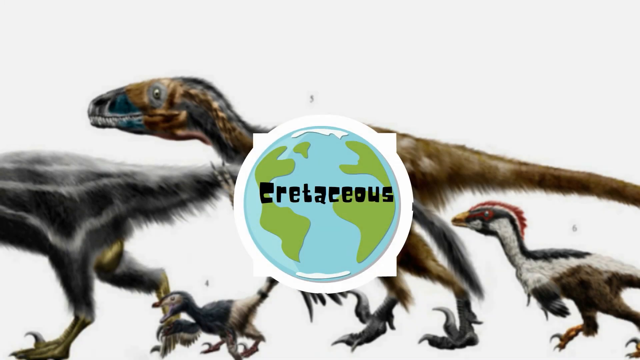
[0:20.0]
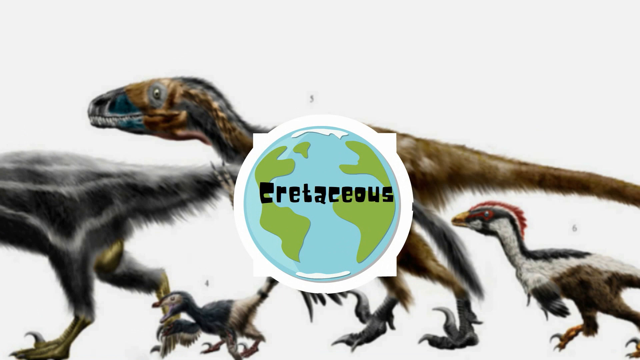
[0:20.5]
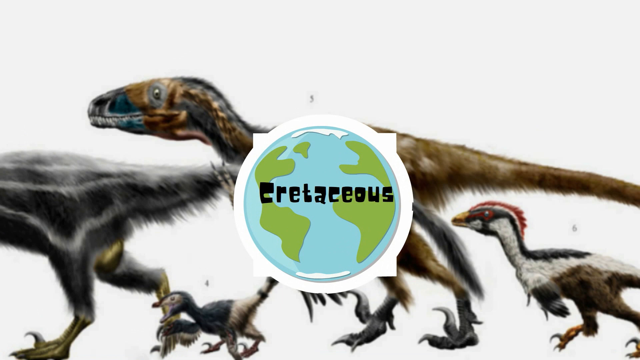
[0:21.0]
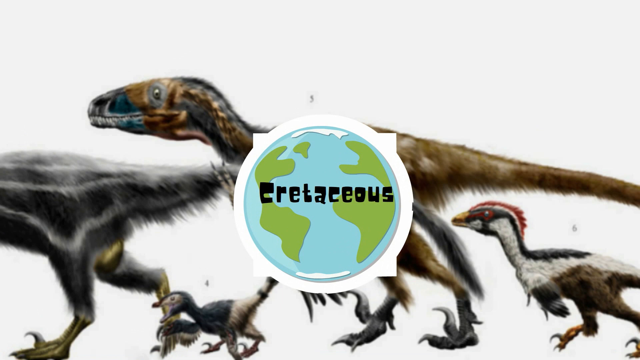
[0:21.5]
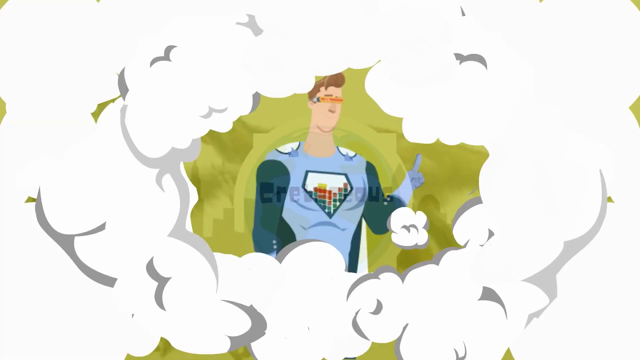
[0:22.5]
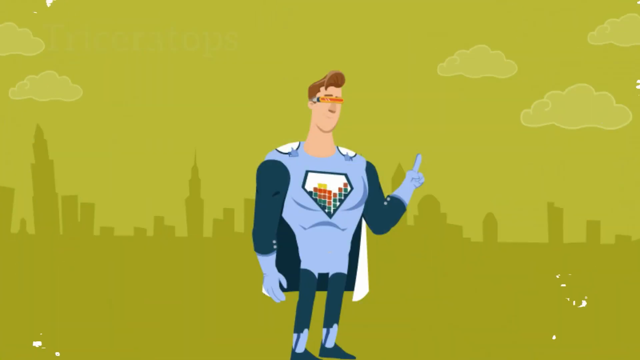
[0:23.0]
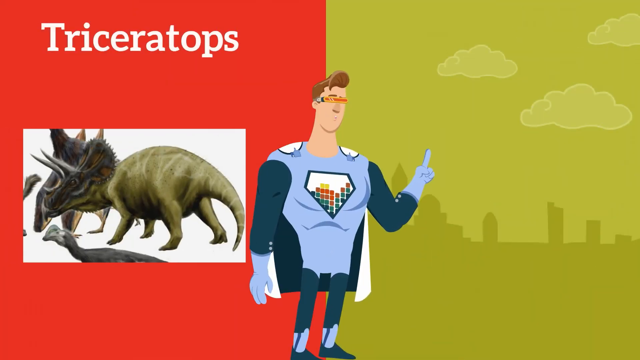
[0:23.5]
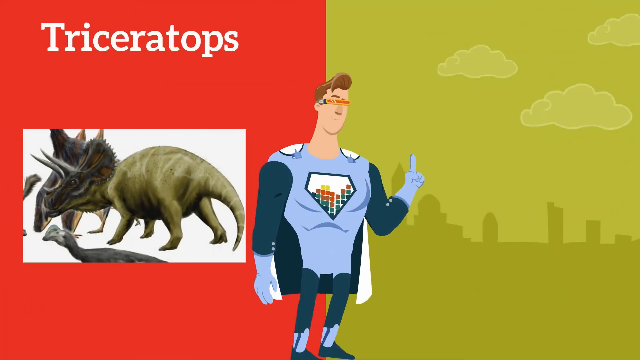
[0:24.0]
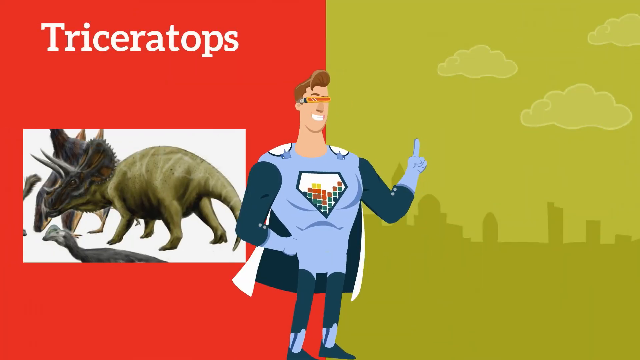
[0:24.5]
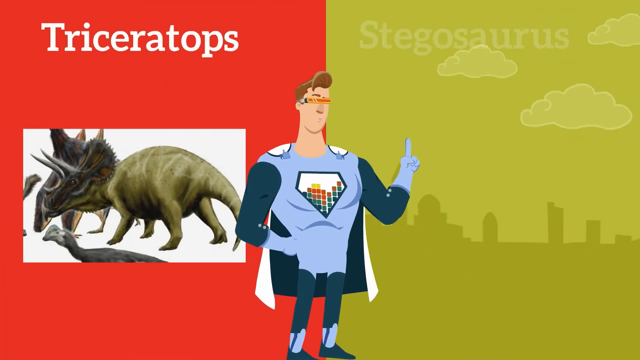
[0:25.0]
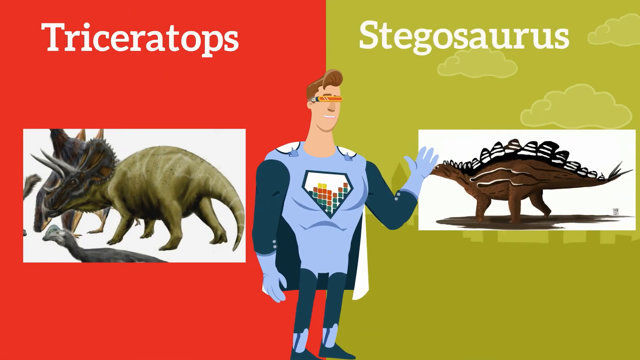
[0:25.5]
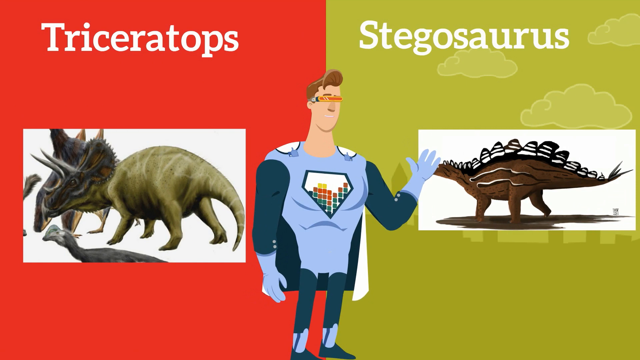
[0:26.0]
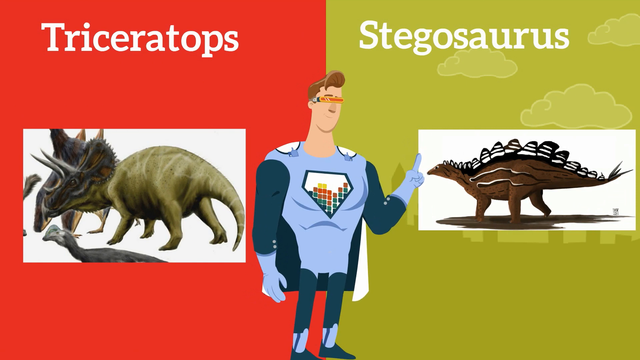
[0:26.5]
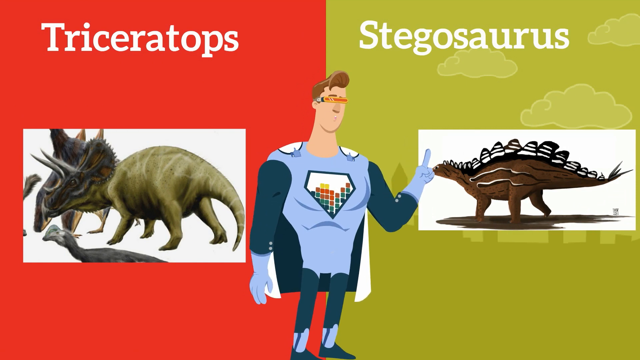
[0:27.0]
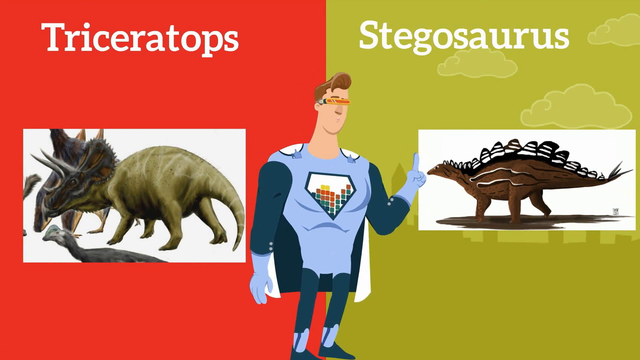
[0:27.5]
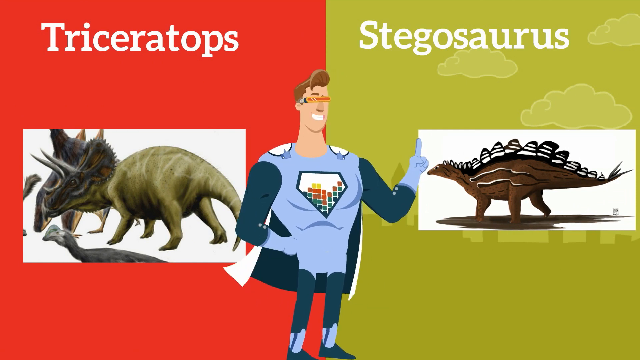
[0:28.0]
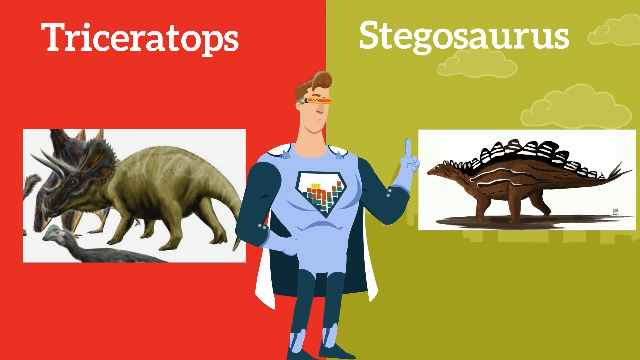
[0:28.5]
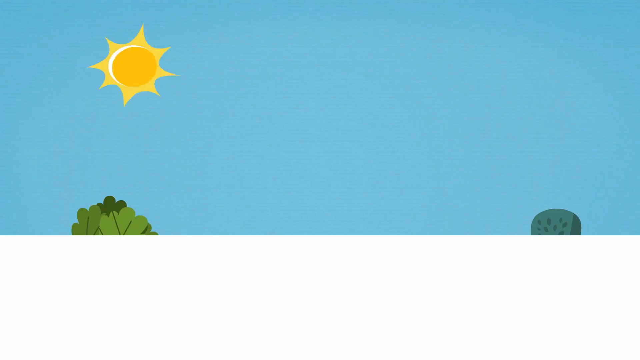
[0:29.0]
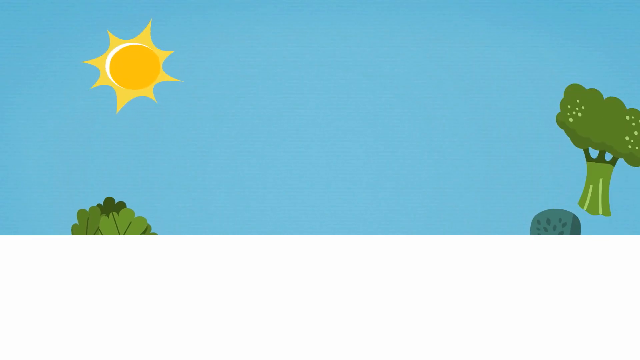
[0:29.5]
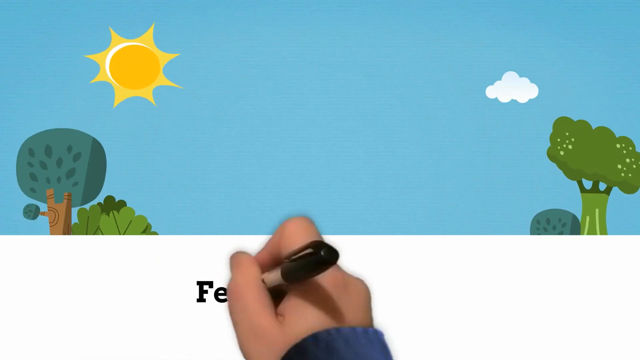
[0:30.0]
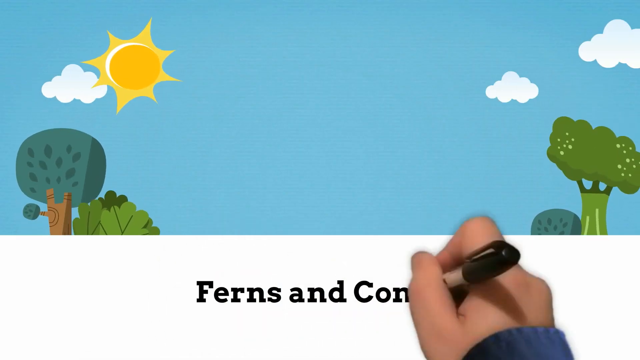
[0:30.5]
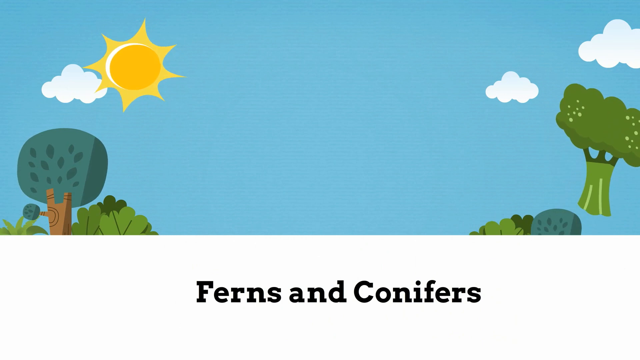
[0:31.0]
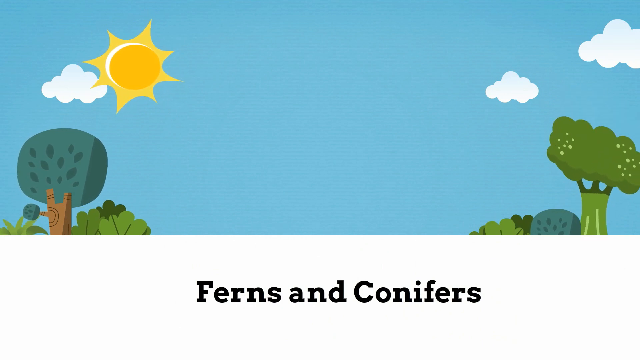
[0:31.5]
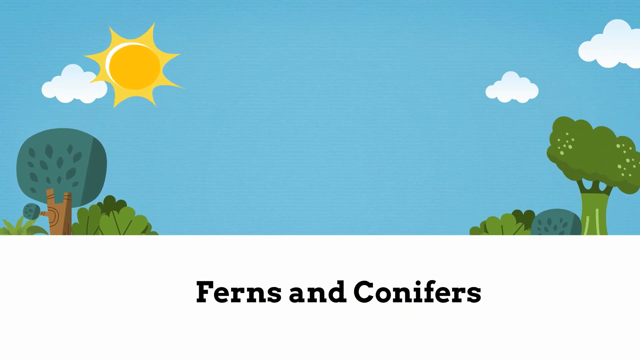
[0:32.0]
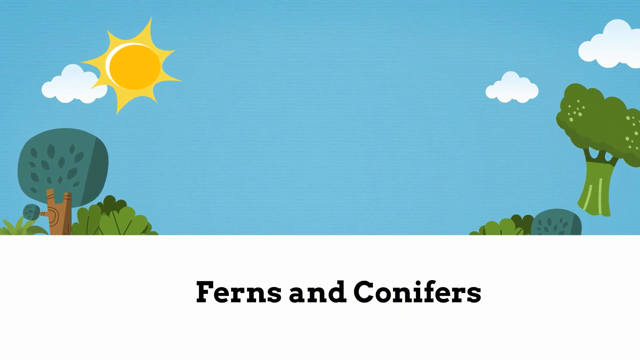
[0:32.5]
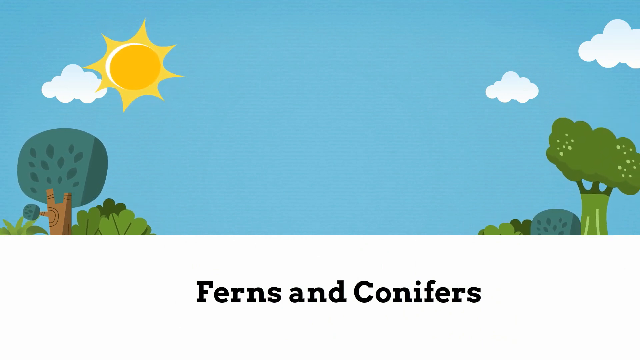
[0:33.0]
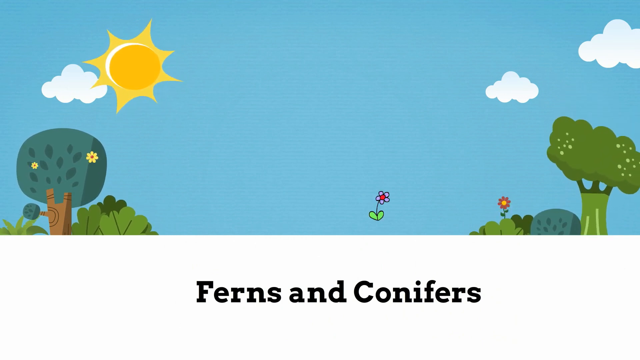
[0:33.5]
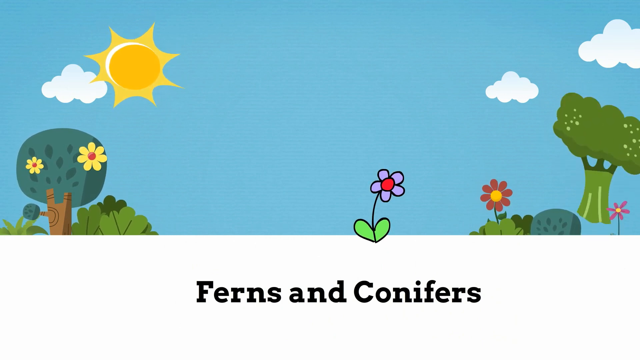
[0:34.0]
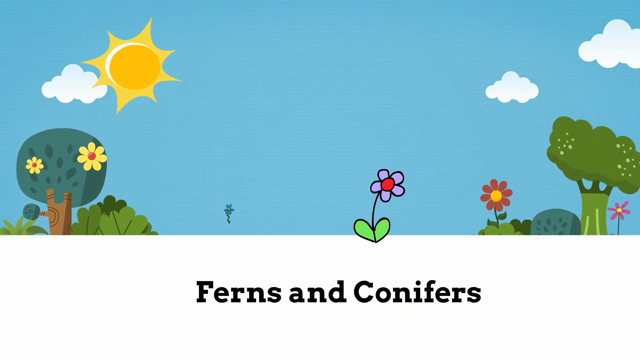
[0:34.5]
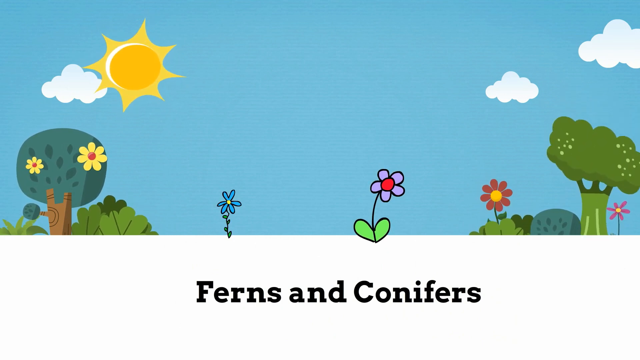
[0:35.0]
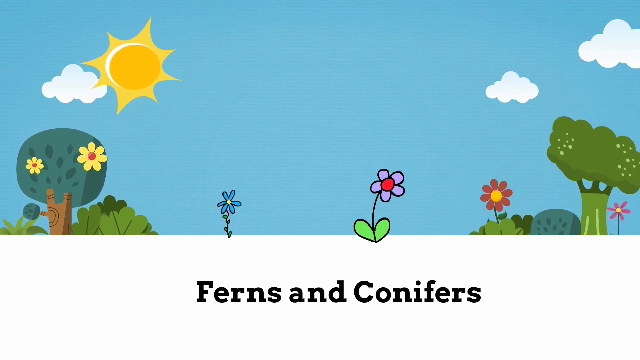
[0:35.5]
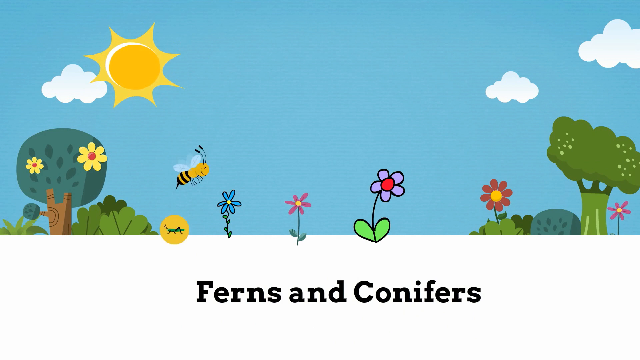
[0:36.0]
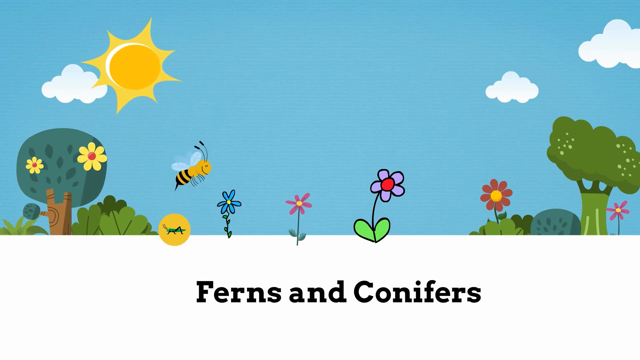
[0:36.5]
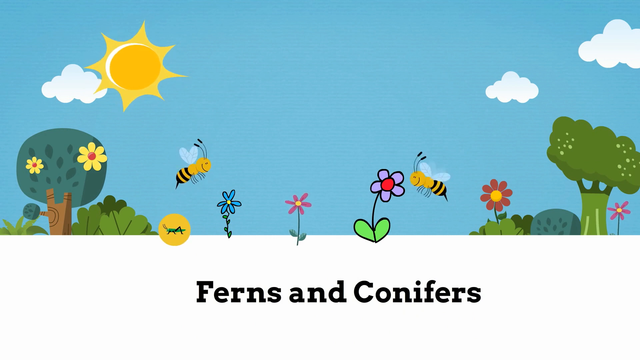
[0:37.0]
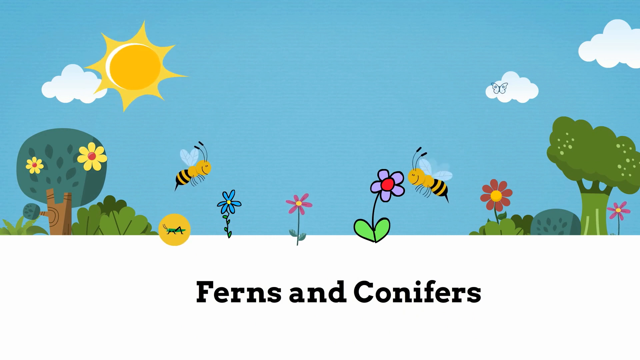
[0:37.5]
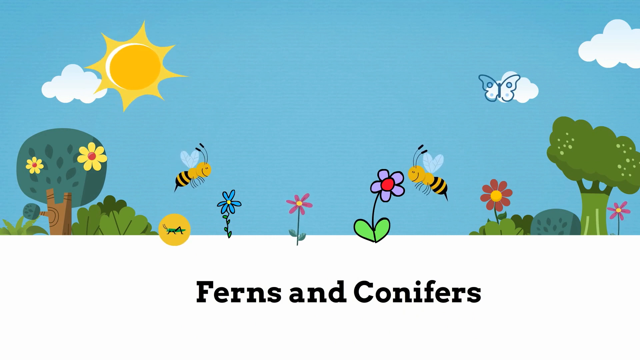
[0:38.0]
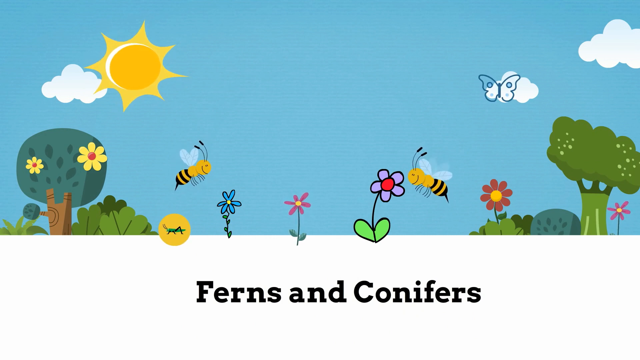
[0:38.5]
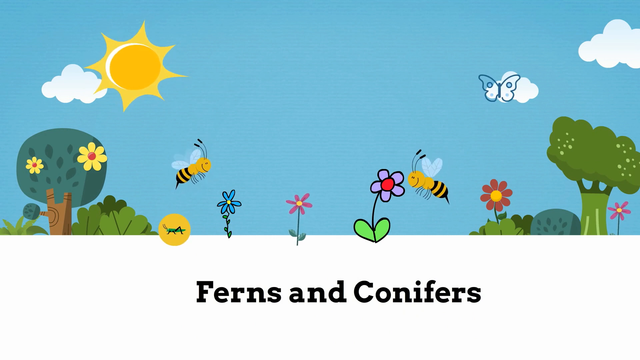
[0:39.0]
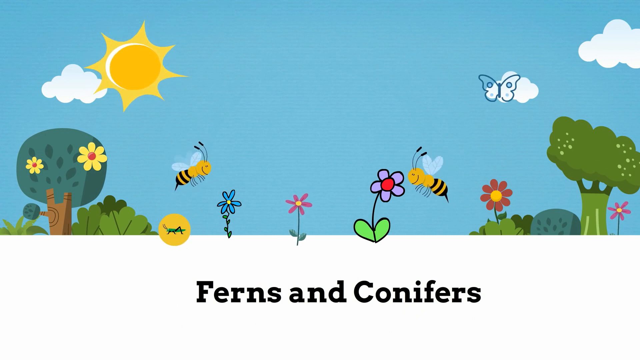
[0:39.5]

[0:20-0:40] A planet is labeled with the word Cretaceous, and in the background there are a couple of what seem to be dinosaurs, apparently some kind of raptor, looking like birds. Something makes some sort of explosion, and everything disappears for a second. A man dressed like some kind of superhero appears, with triceratops on the left side of the screen against a red background and stegosaurus on the right side against a yellow background with some clouds and what seems to be a city. Then trees and bushes appear in a calm sunset afternoon, with ferns and conifers, and some flowers, bees, insects and butterflies appear.